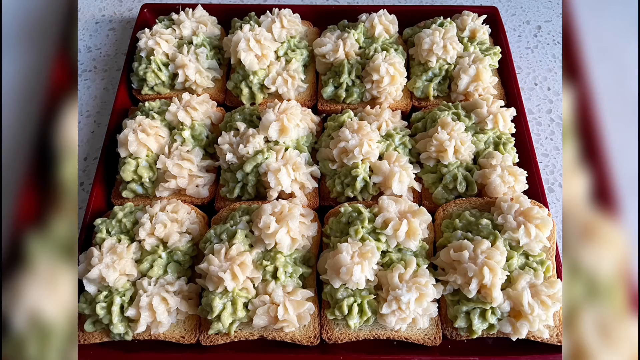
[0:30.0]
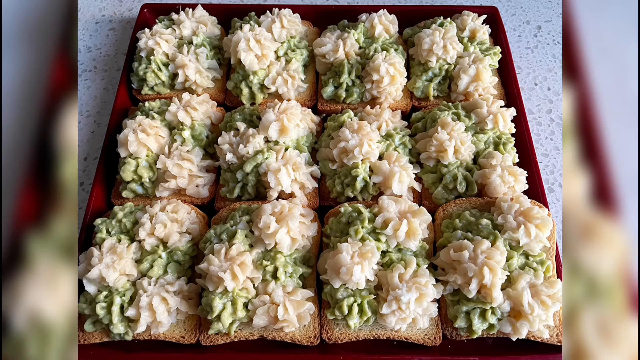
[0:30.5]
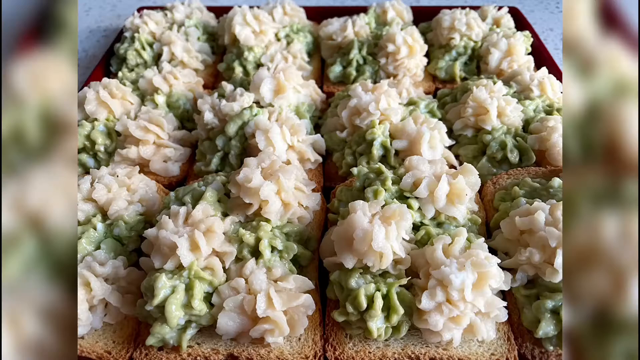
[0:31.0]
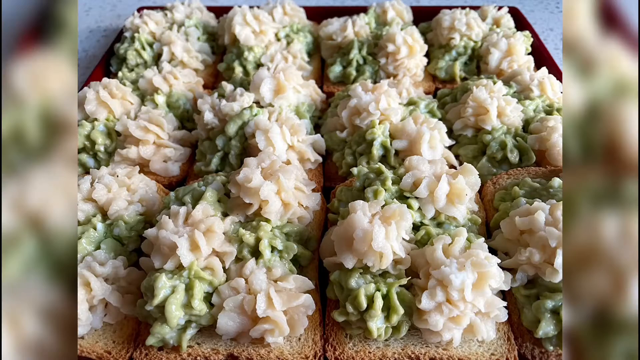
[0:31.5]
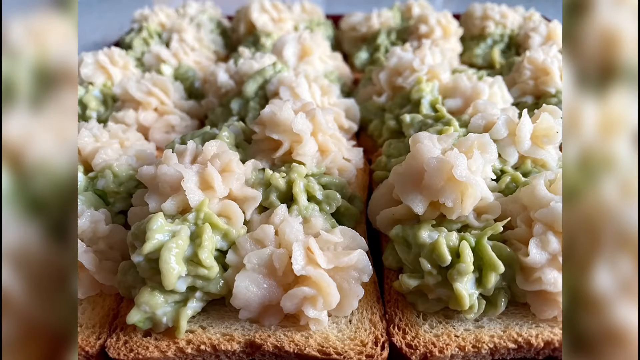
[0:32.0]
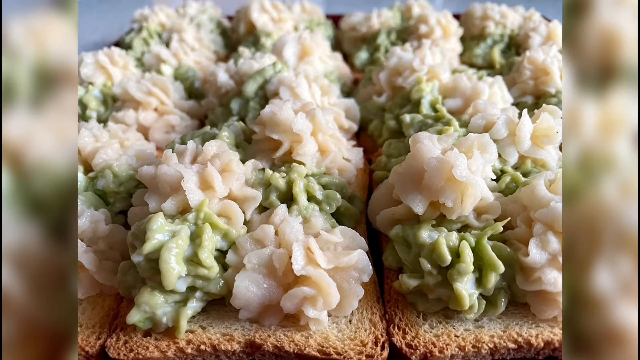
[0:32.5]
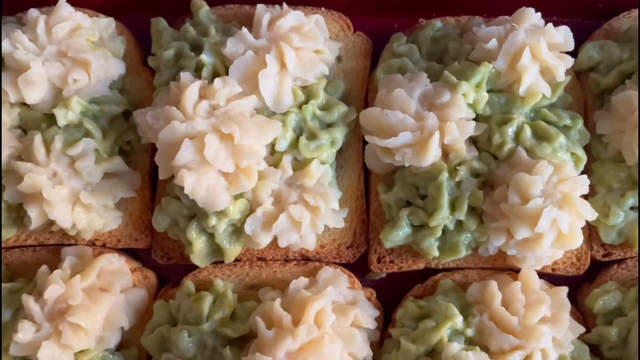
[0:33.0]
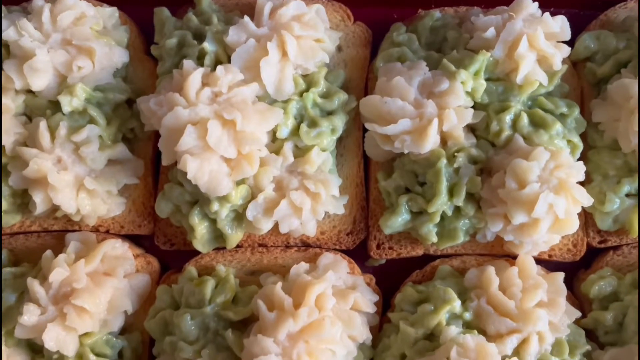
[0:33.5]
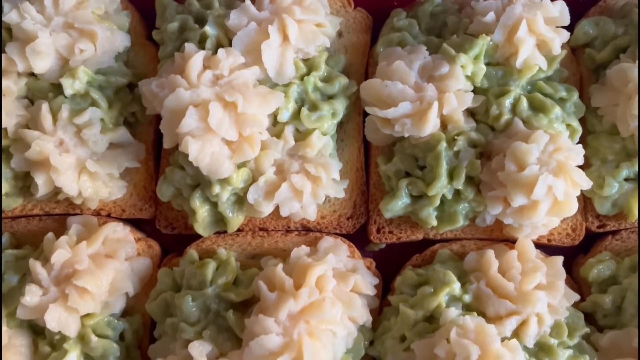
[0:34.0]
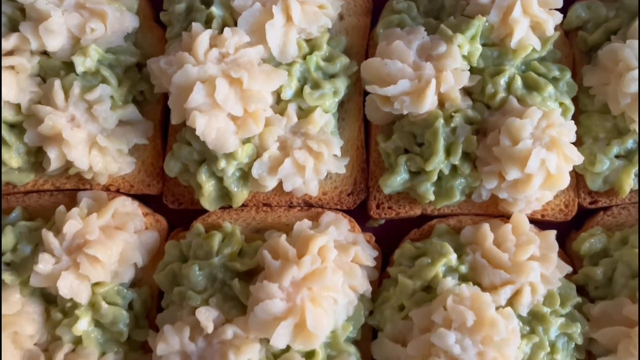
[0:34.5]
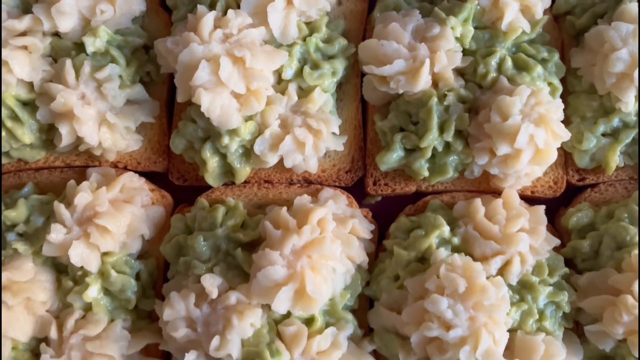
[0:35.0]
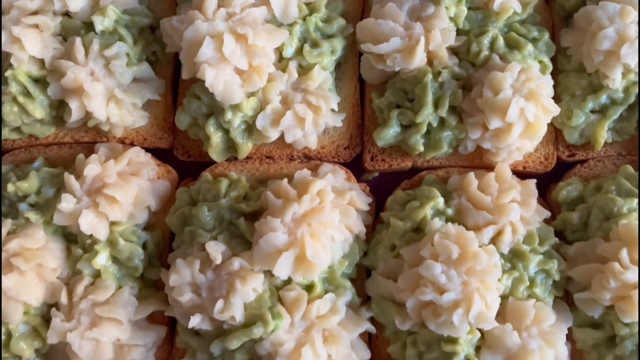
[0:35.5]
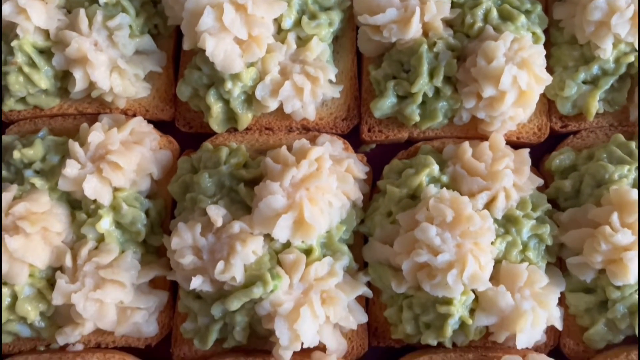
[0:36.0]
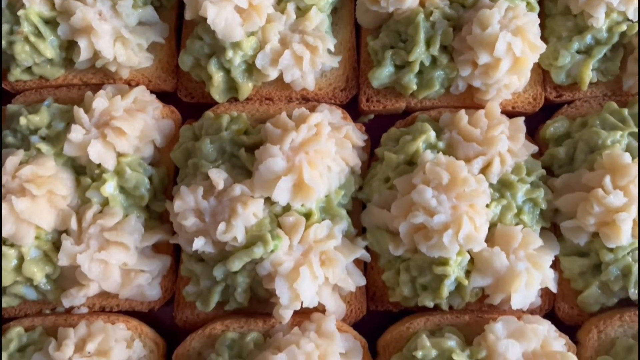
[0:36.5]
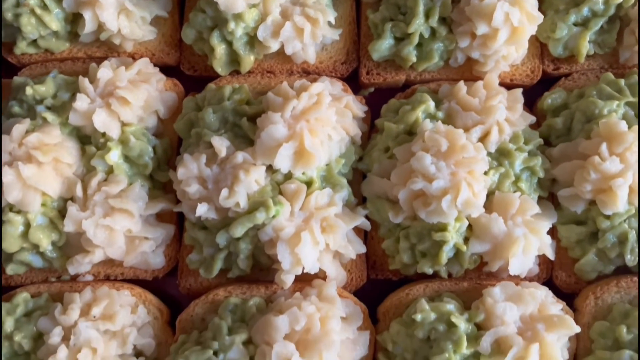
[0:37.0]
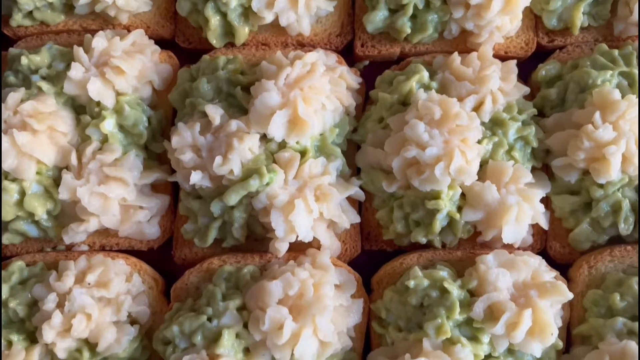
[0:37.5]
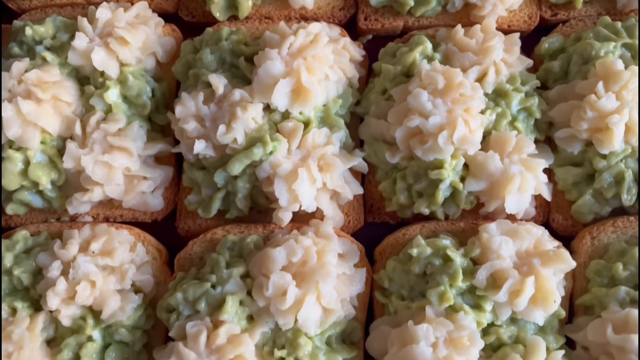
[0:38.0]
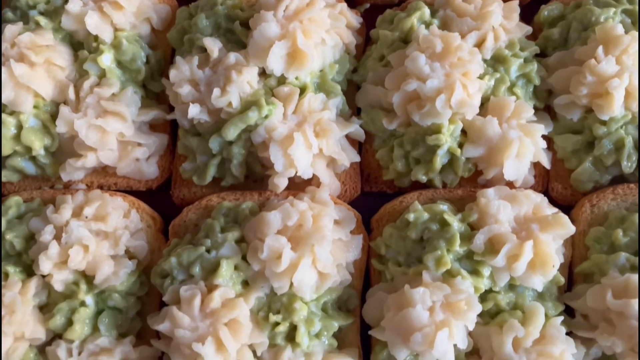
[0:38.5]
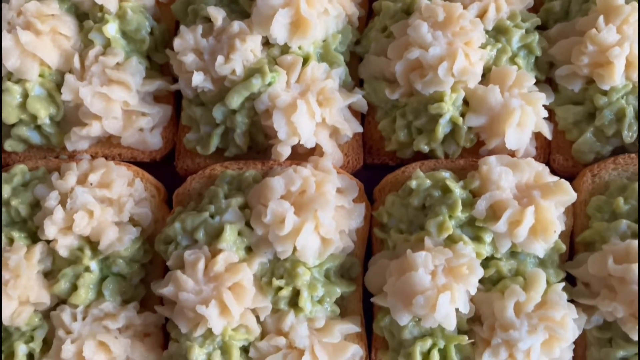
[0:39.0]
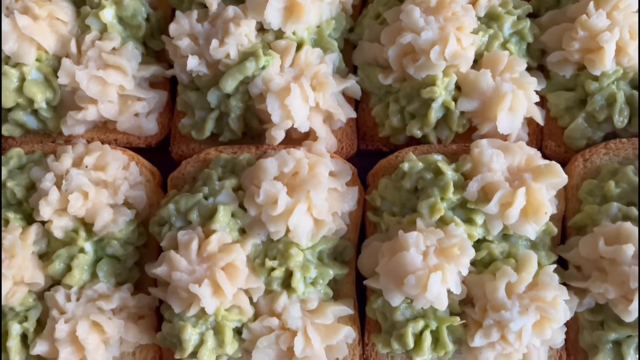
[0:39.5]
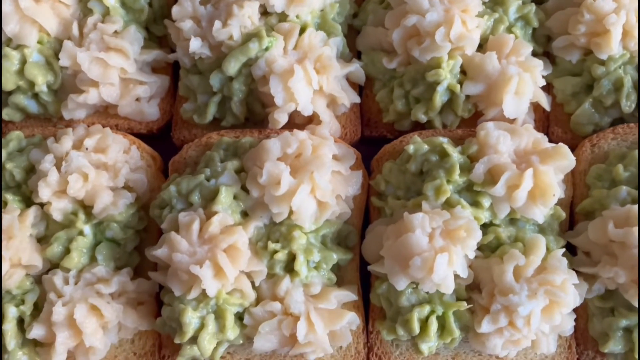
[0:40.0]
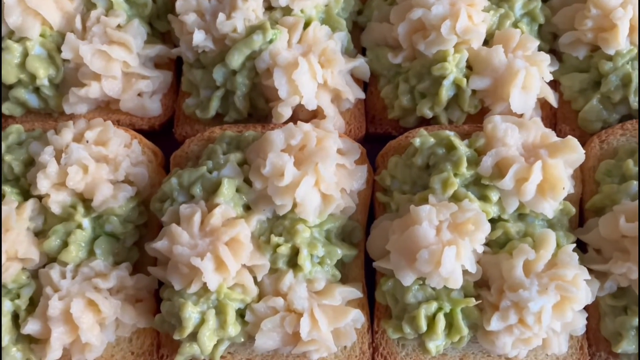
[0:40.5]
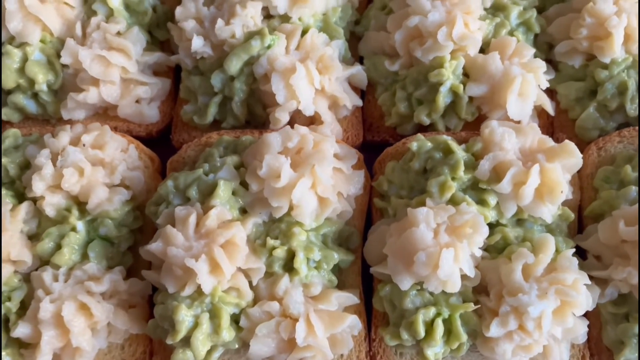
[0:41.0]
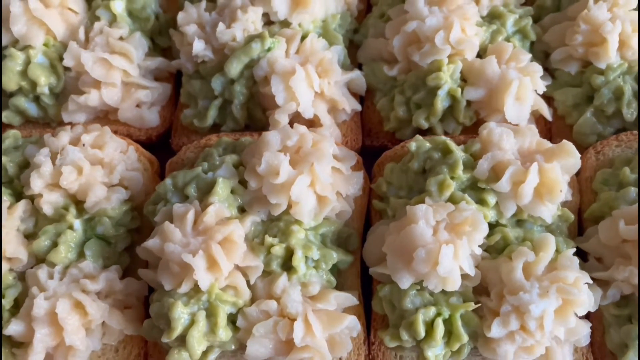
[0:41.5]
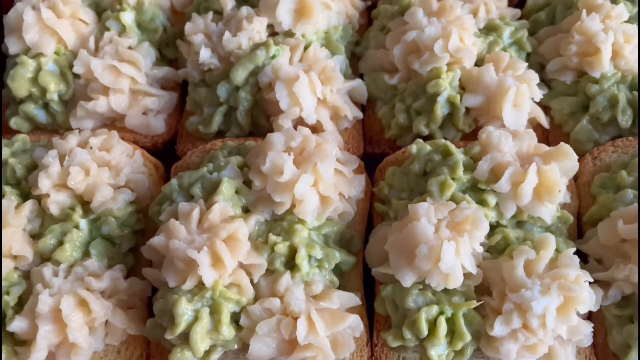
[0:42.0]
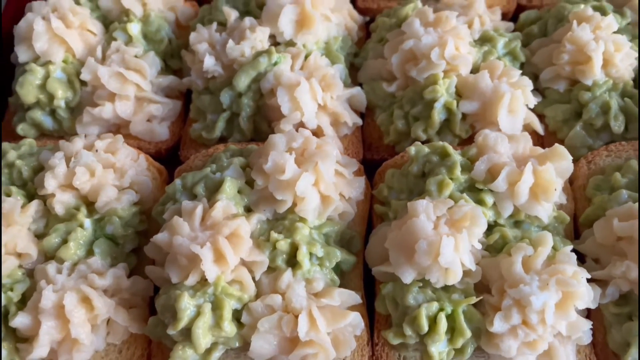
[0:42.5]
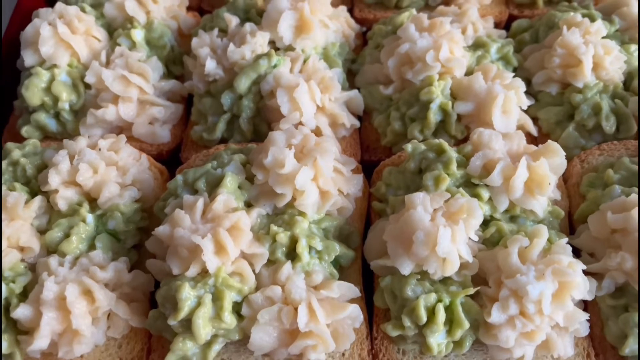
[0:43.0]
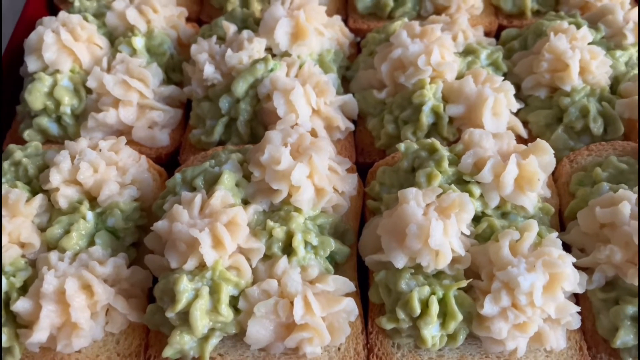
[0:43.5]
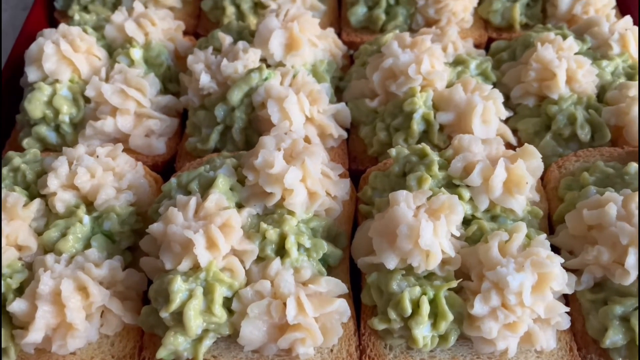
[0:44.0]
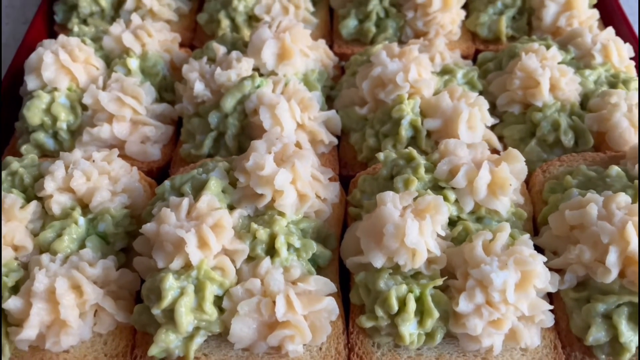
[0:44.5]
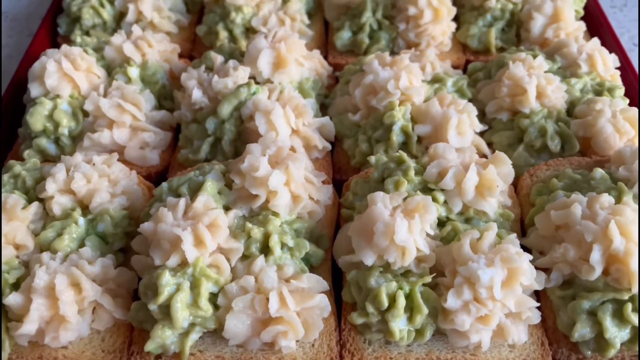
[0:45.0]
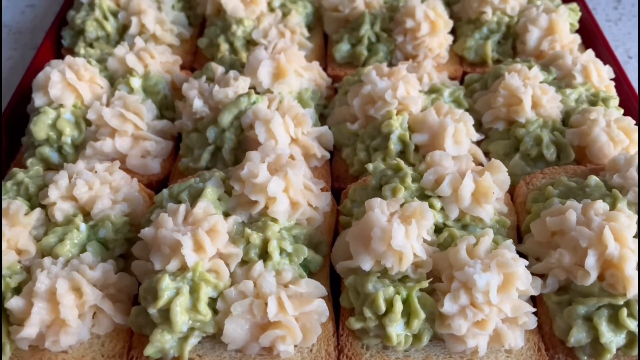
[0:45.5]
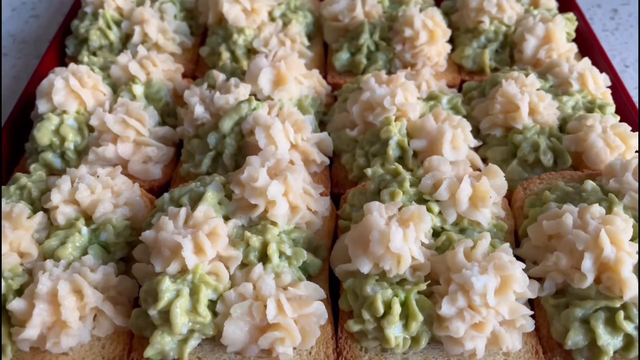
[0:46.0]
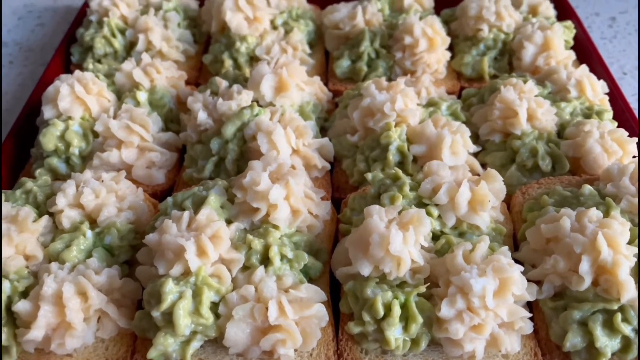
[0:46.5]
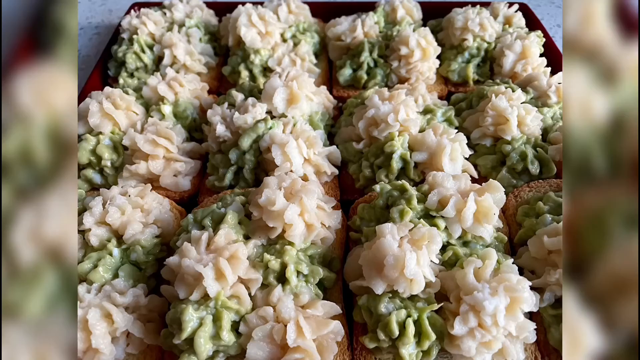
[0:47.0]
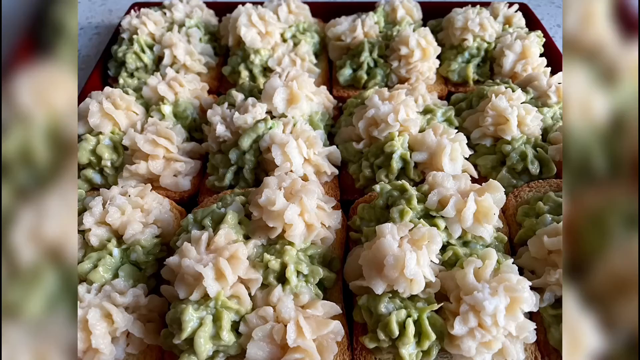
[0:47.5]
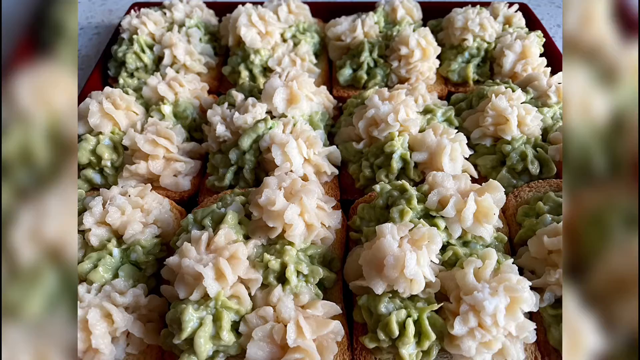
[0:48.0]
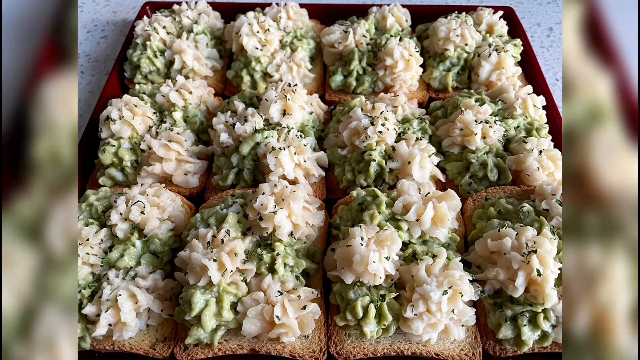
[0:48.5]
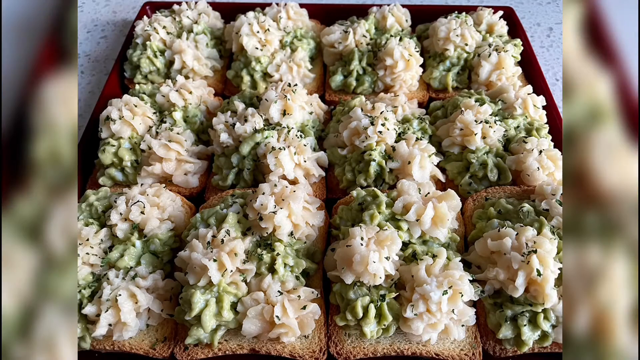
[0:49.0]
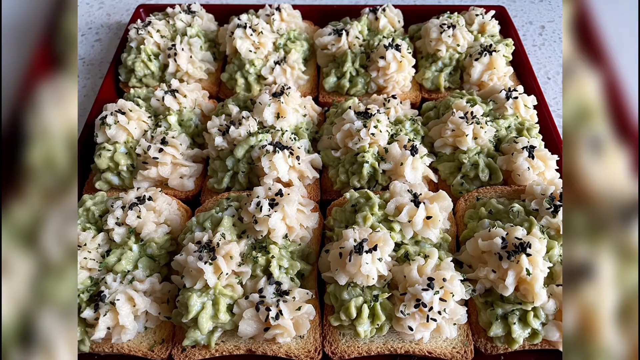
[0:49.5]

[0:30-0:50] A red tray on a white tabletop or countertop holds 12 pieces of bread organized neatly in three horizontal rows and four vertical columns. On top of every piece of bread are several dollops of a mixture of eggs and avocado and potato and avocado. A close-up of the bread in the tray follows, then an even closer angle. The camera pans down to an overhead shot of the center columns of bread covered in the egg and avocado mixture and the potato mixture, then pans down a little. Another image of the bread on the tray follows, then a zoomed-out image. A black powder, possibly pepper, is then sprinkled onto the bread.